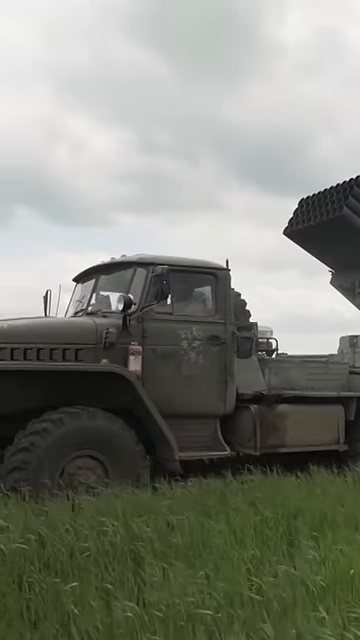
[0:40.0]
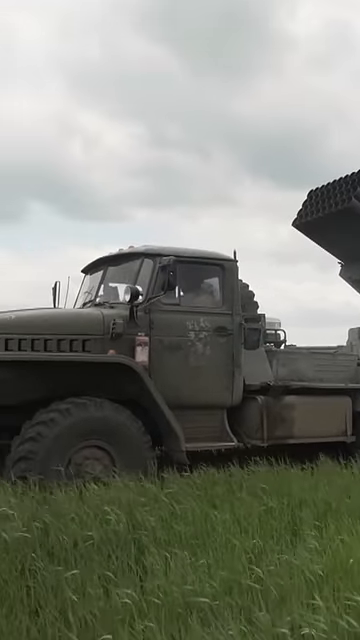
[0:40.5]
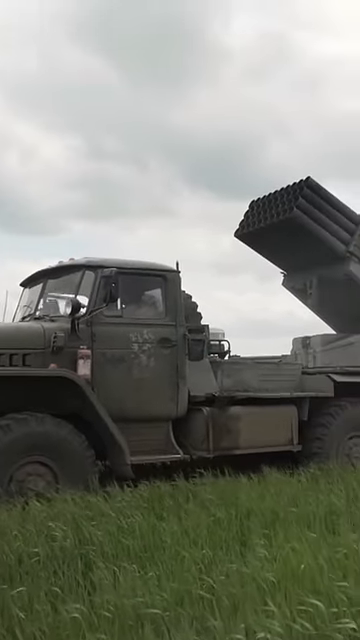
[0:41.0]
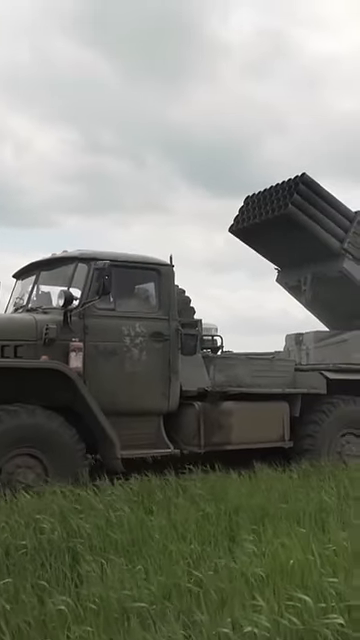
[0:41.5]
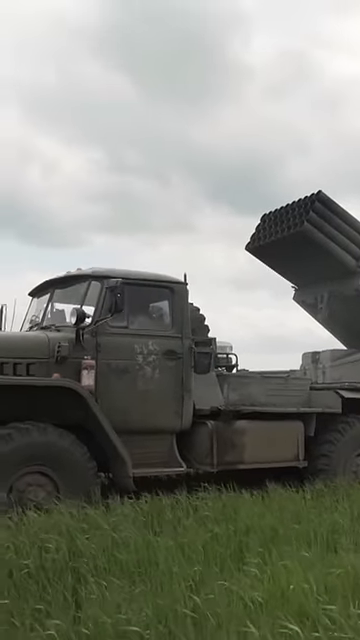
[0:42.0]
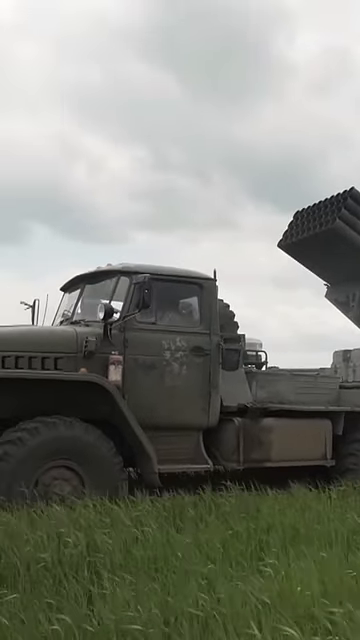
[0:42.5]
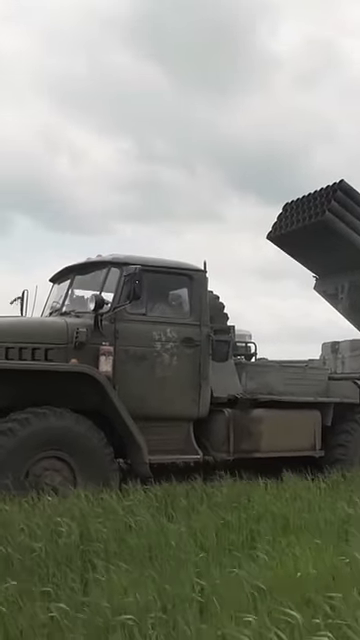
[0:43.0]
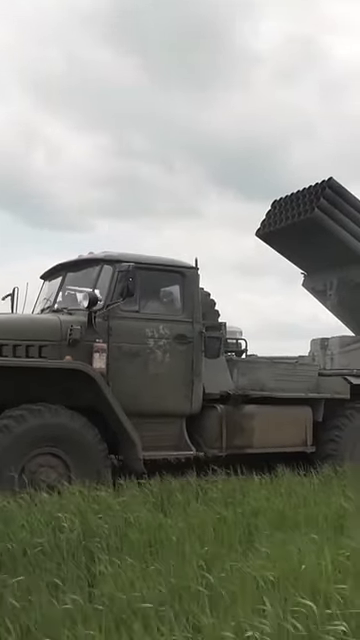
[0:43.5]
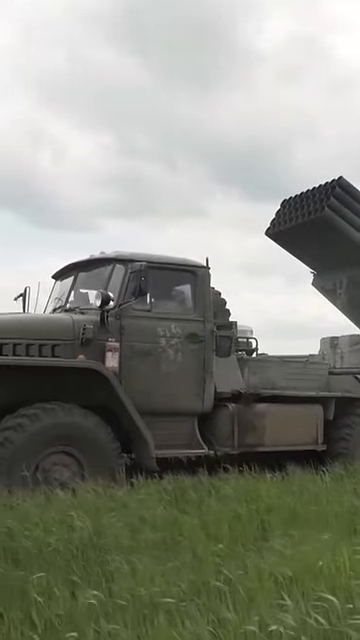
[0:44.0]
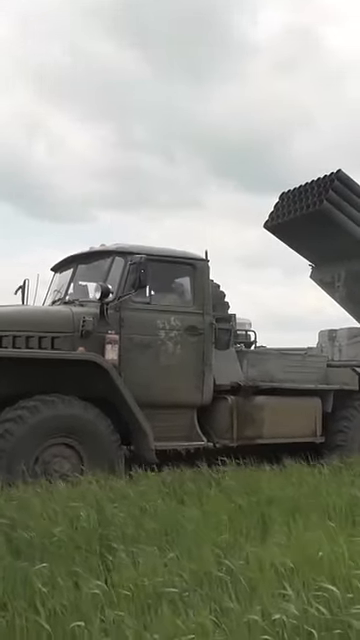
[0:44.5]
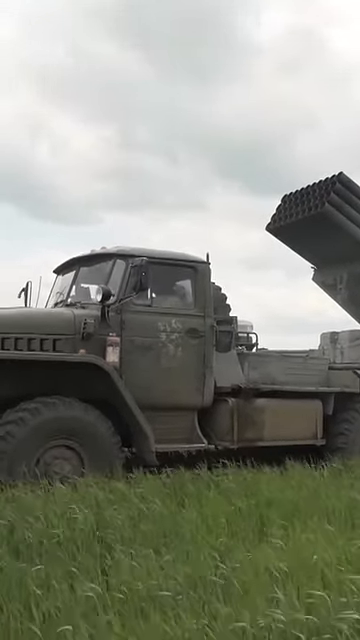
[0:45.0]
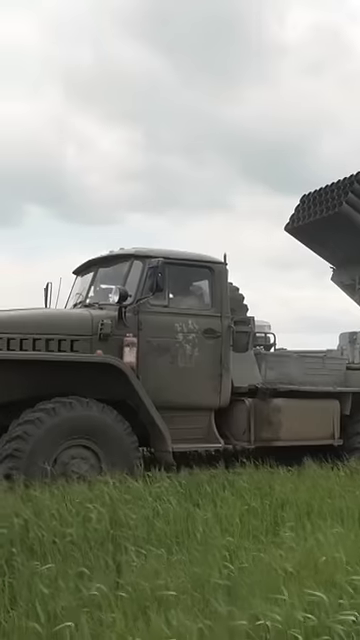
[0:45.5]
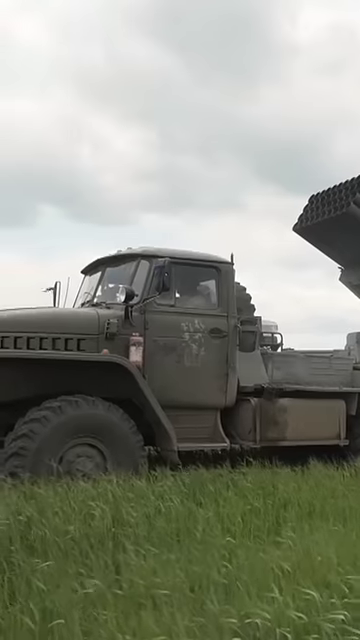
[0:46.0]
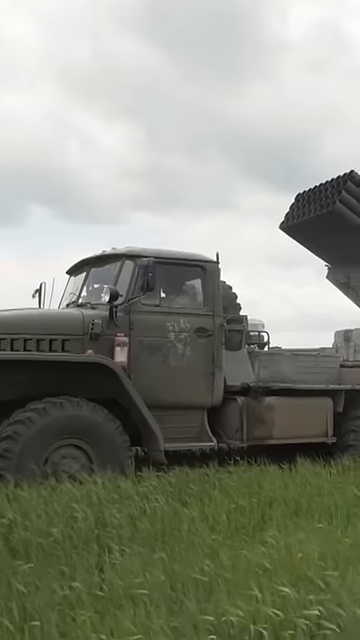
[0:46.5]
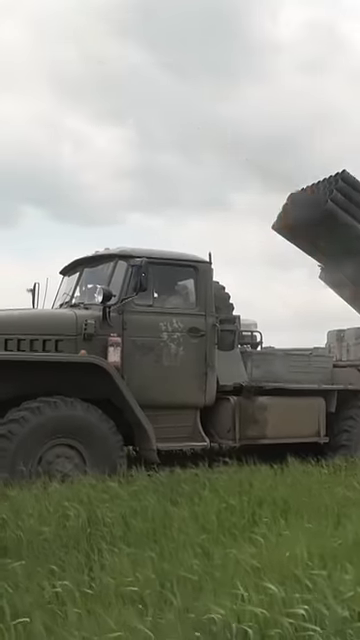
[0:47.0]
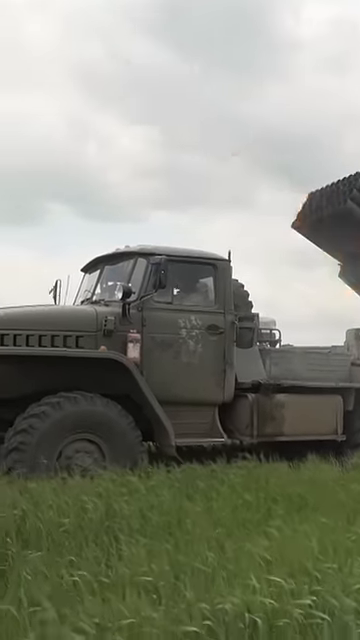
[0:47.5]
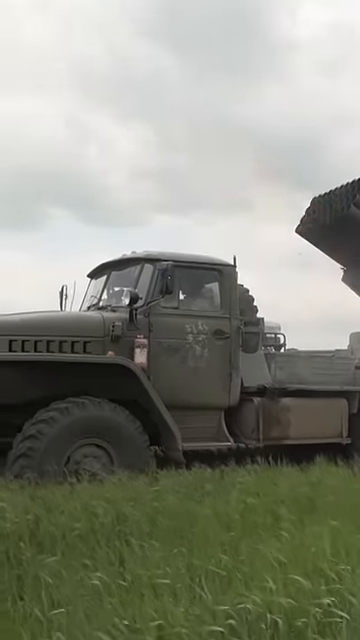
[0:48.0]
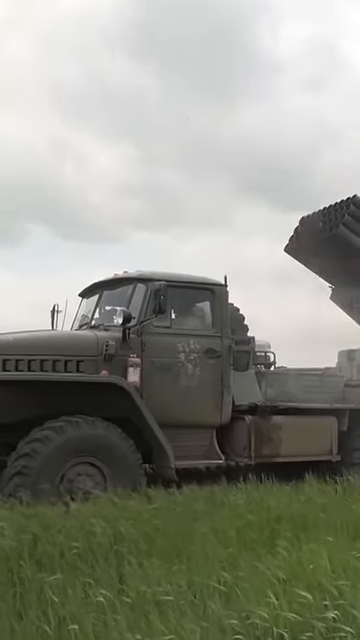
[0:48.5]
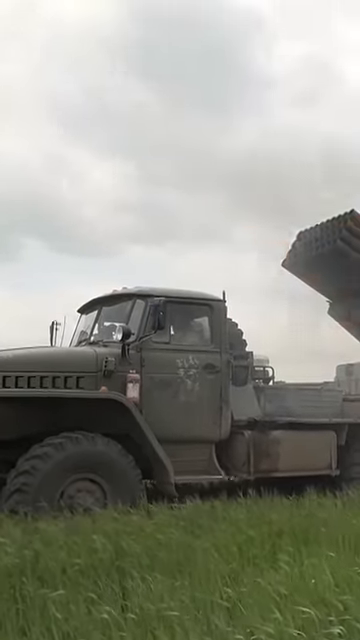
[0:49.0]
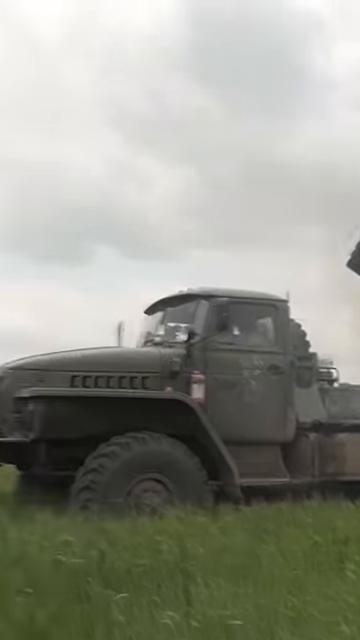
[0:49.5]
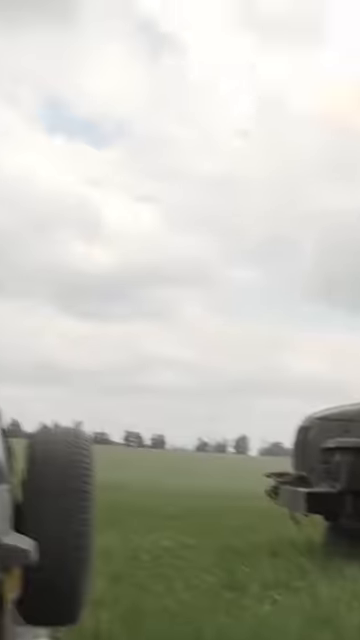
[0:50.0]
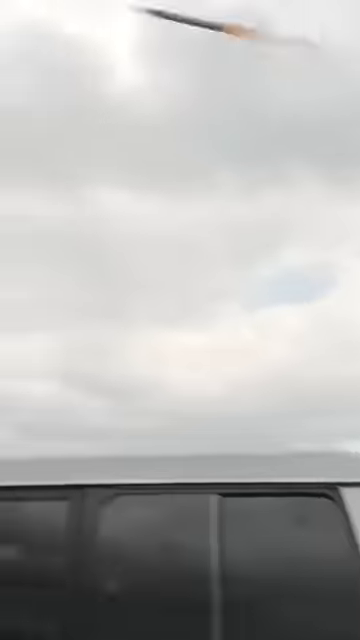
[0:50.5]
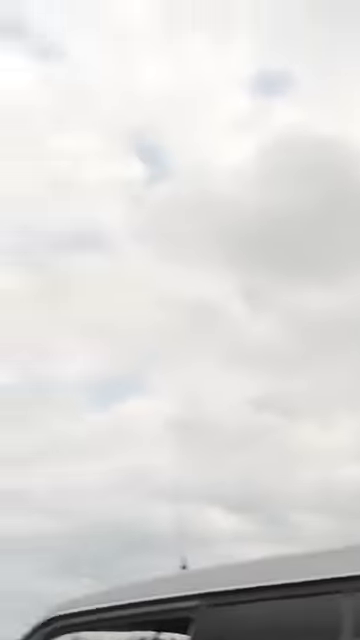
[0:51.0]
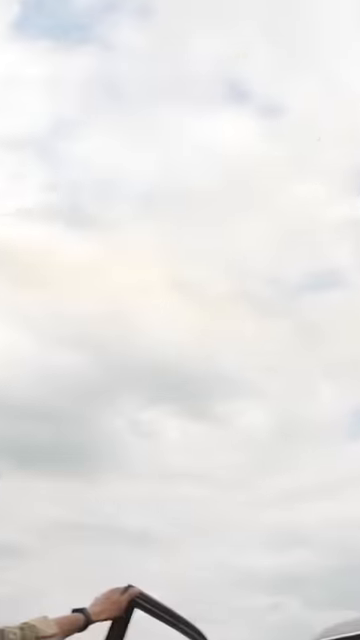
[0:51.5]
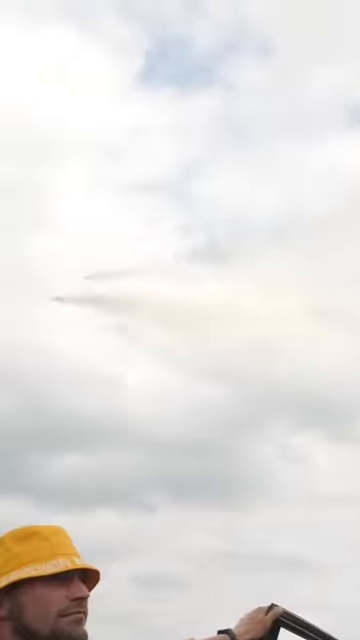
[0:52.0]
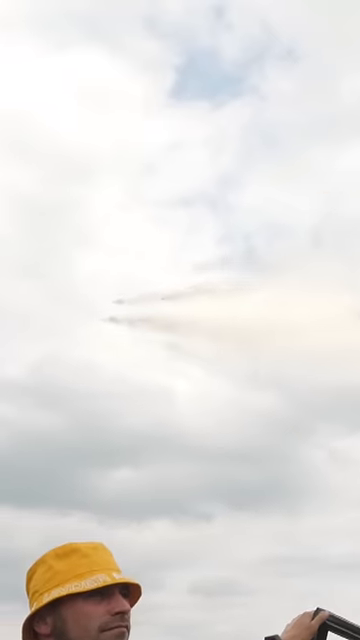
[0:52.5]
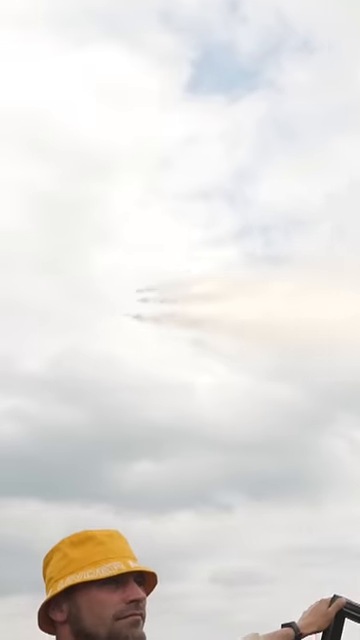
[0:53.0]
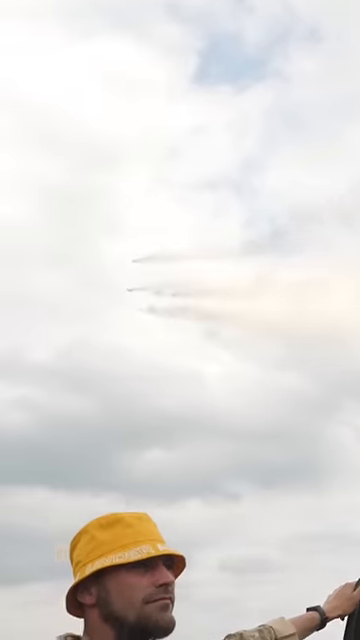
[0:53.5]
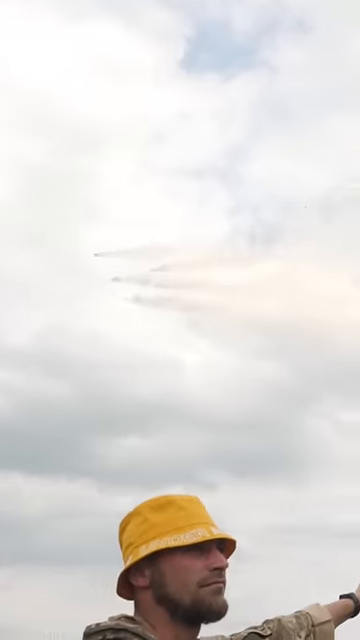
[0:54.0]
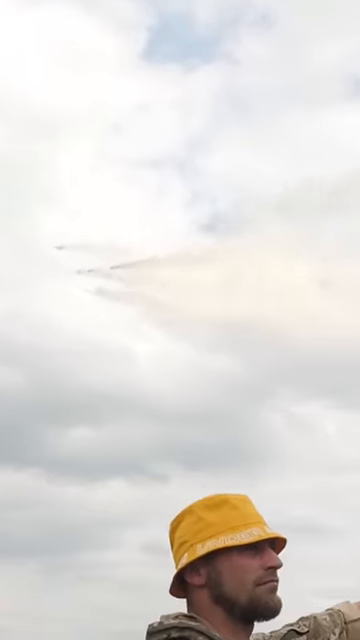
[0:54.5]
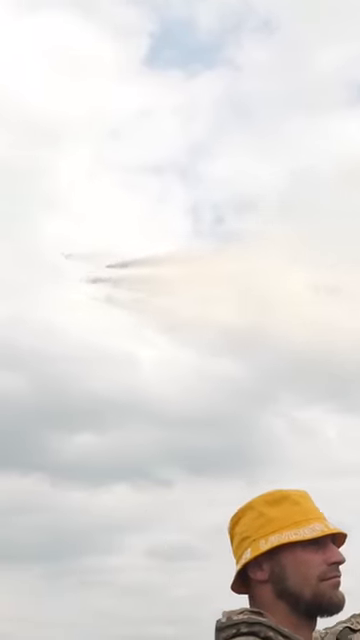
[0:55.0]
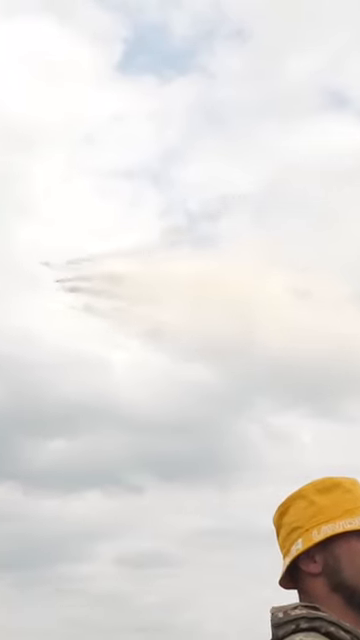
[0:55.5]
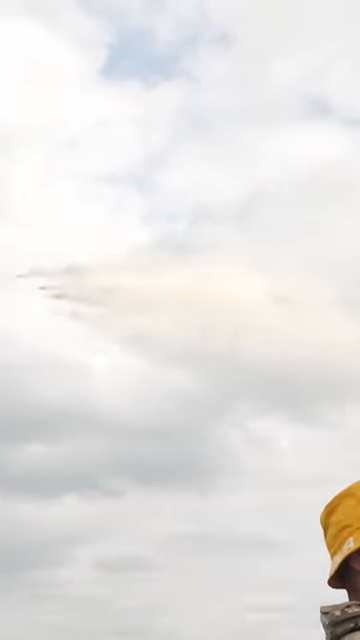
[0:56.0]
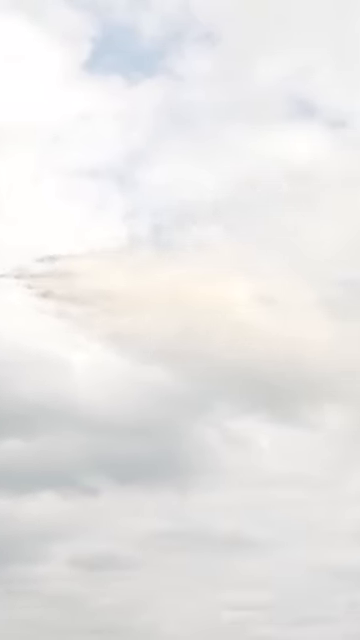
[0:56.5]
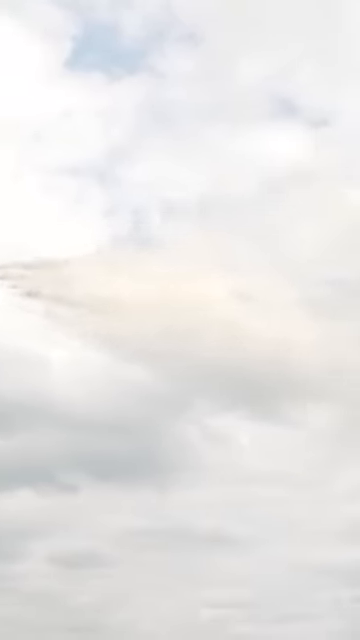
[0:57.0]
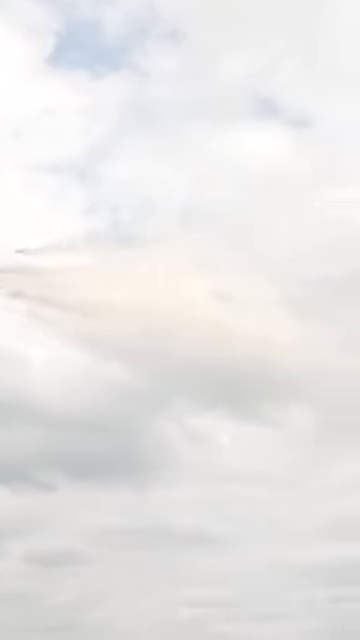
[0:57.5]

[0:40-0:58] The rocket launcher truck is outside, not launching at the moment. Then it starts launching again, and the rockets arc into the cloudy sky again. The truck is army green with a rocket launcher on the back. An army man wearing a yellow hat is next to a civilian-looking vehicle. The grass is green.